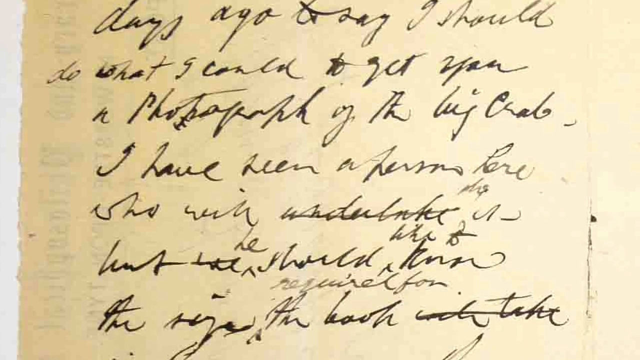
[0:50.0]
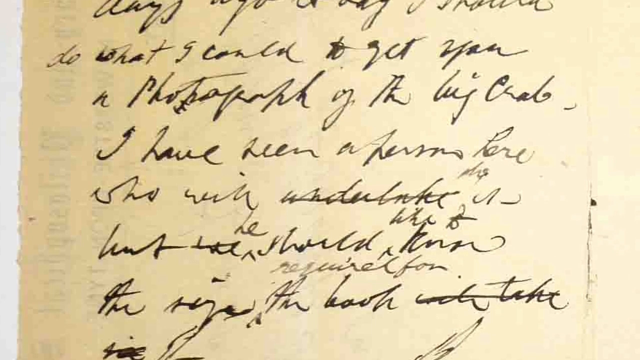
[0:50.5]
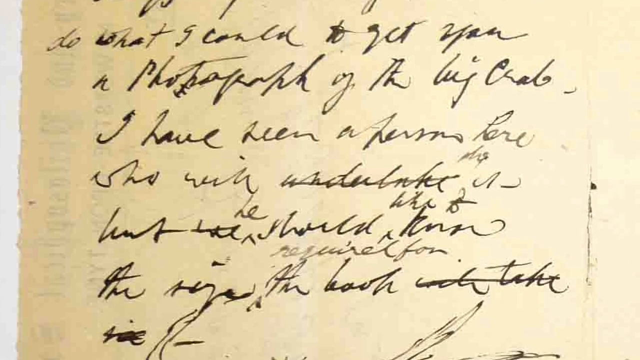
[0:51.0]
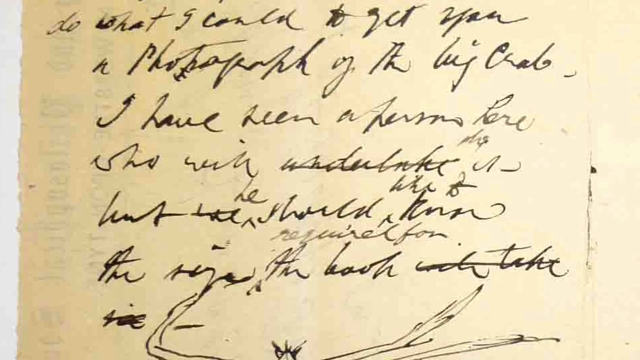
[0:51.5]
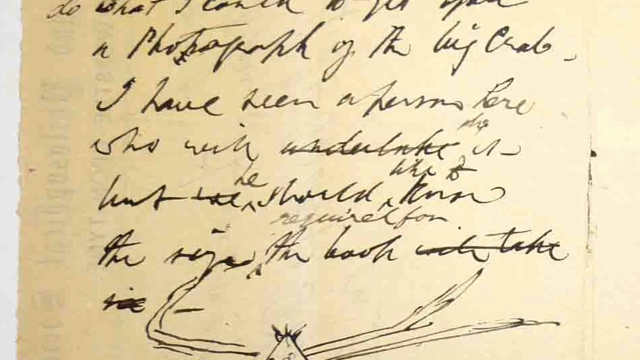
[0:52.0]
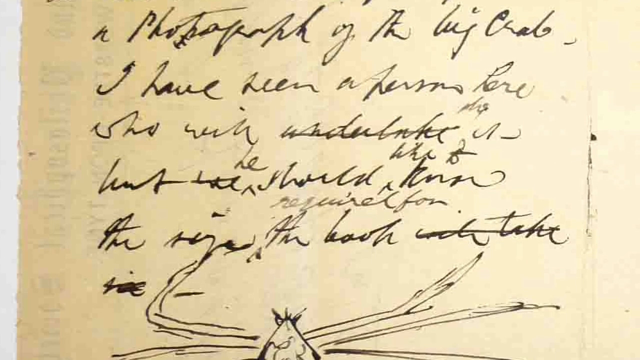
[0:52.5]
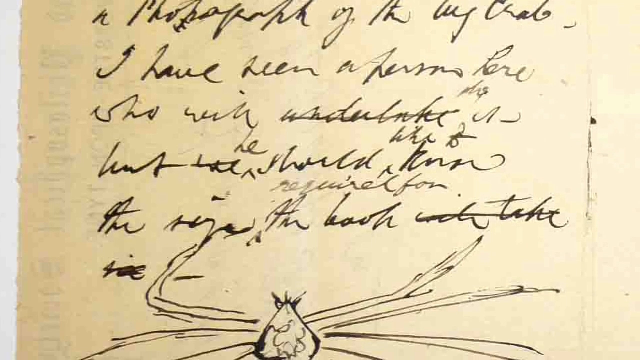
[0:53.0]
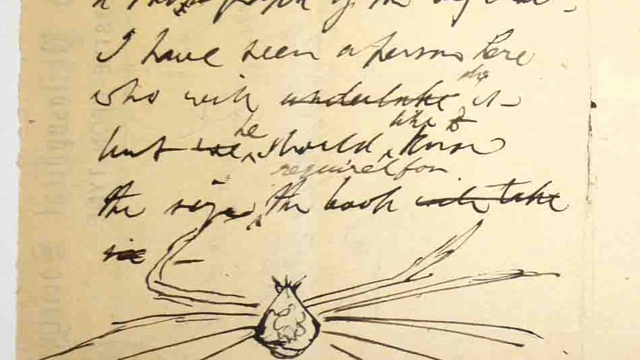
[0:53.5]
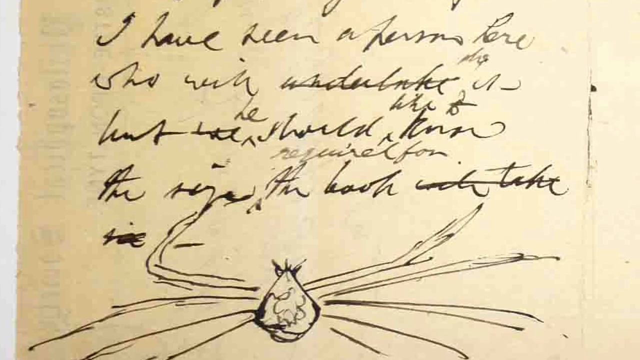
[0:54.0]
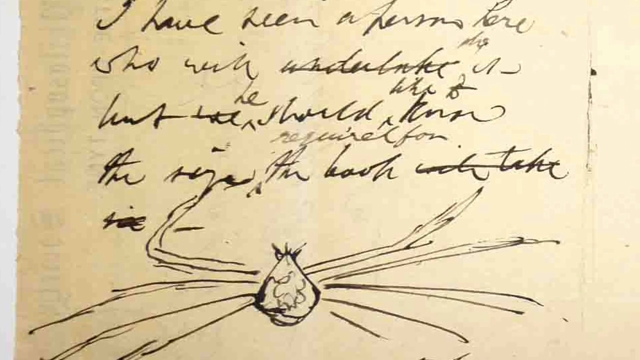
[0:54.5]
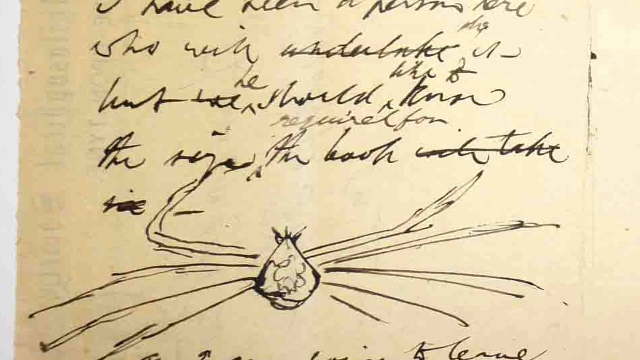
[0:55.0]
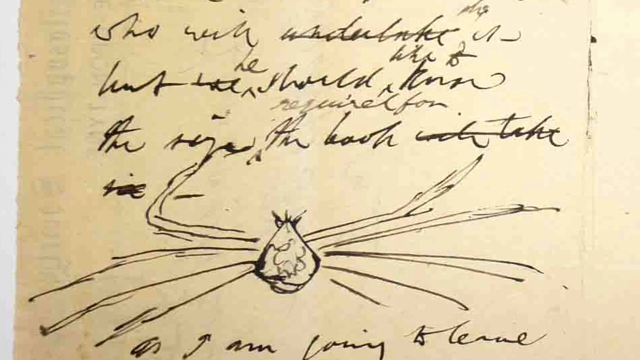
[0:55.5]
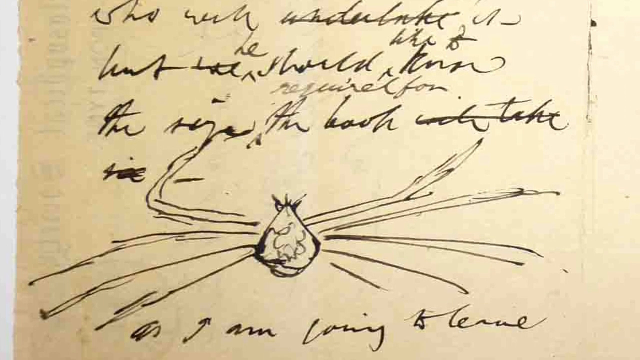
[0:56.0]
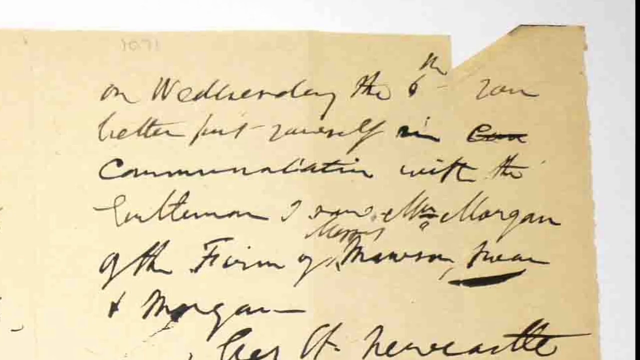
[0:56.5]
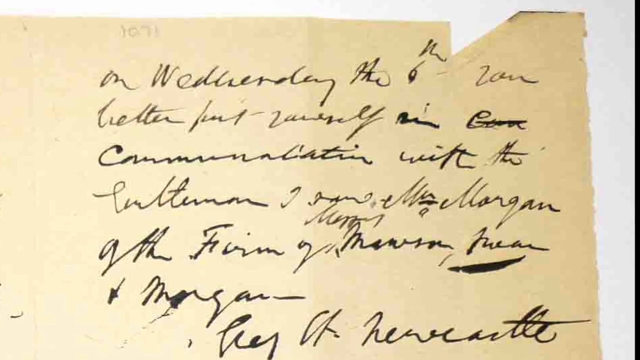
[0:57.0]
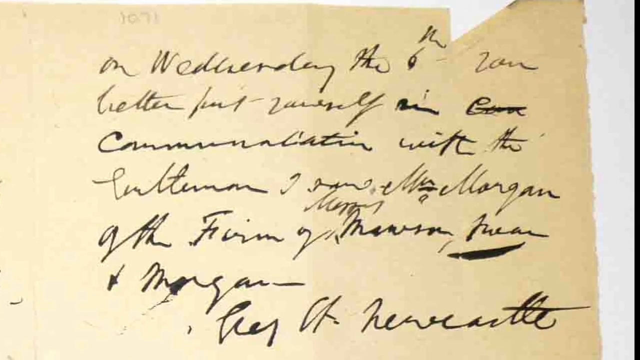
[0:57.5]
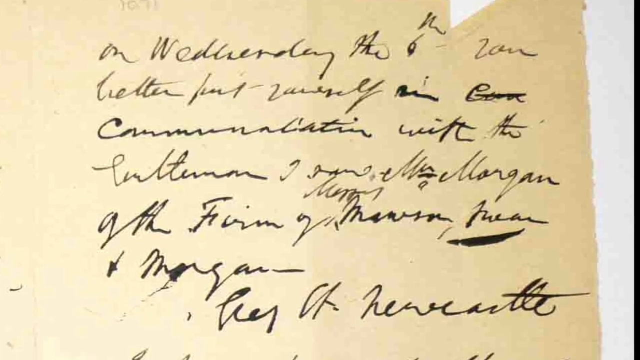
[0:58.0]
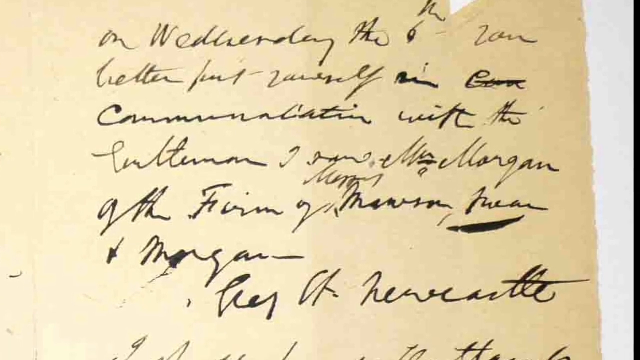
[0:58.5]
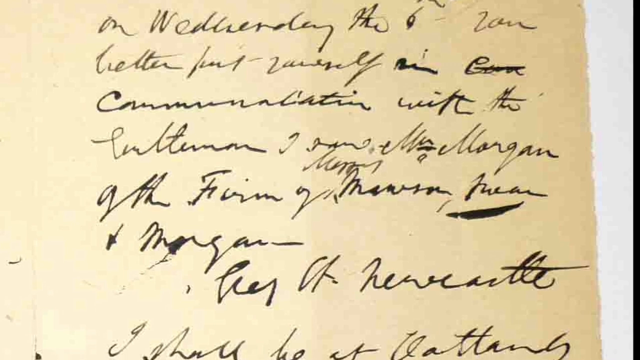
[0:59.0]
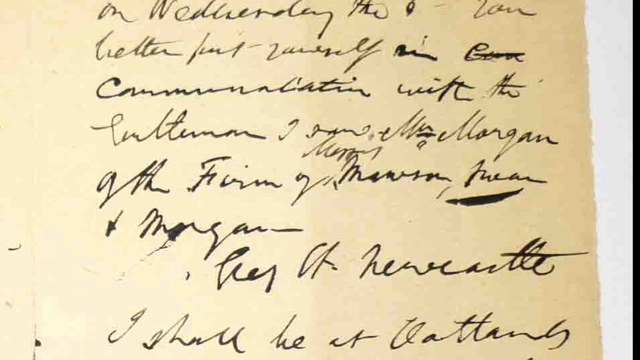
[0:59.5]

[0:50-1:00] The video goes back over the handwritten letter, which is on parchment-like paper in squiggly writing that is hard to read in places. Legible parts include "the big crab. I have been informed," followed by unclear words, a word that may be "undeniable" with a line through it, the word "should," and later "on Wednesday the better" and "communication." The writer has drawn a diagram of what the crab looks like. The letter appears to be written on the back side as well, mistakes are crossed out, and the paper seems to be in good condition.